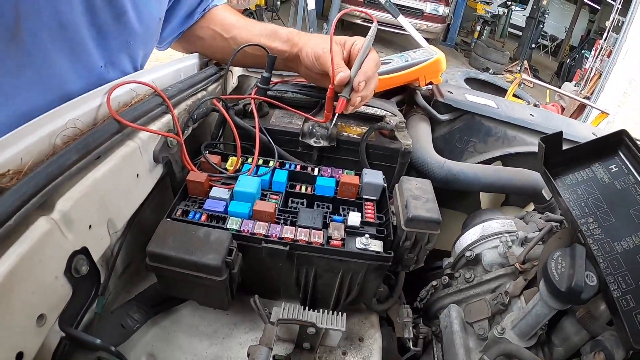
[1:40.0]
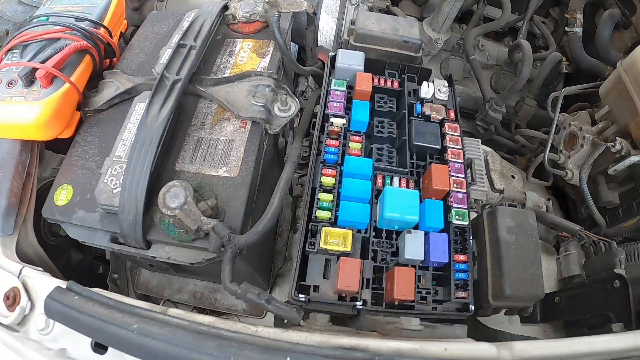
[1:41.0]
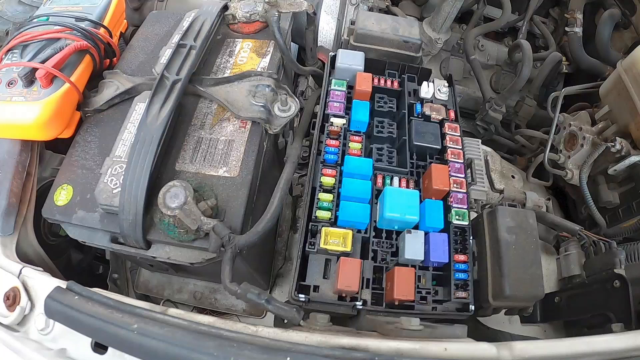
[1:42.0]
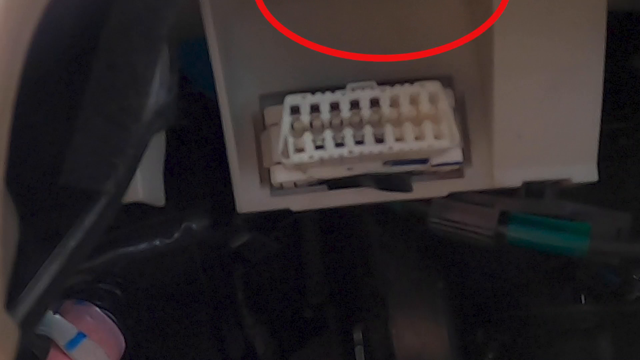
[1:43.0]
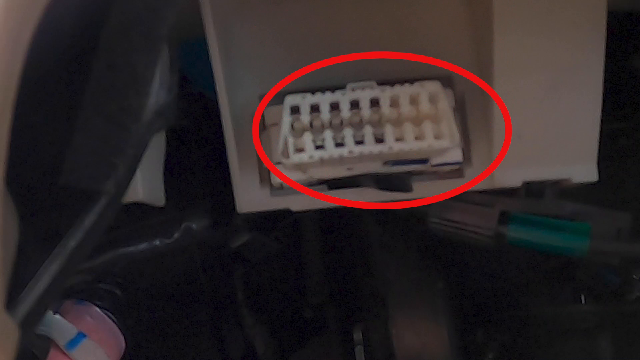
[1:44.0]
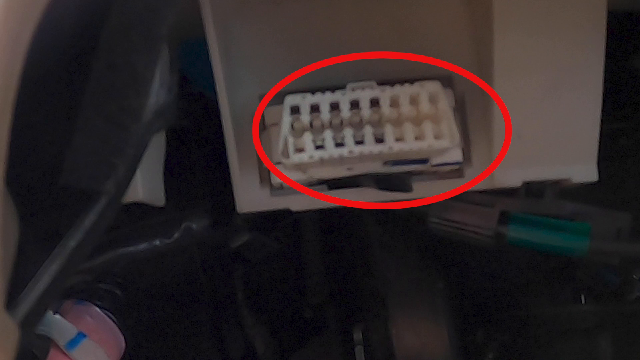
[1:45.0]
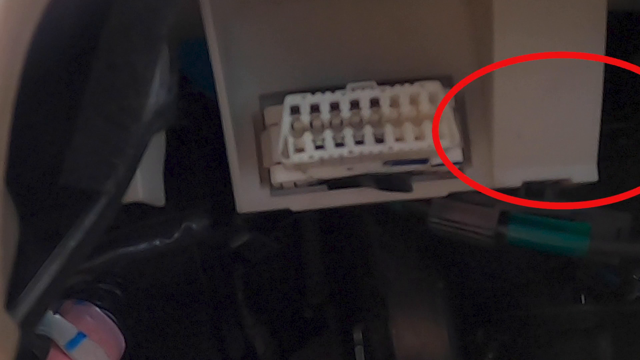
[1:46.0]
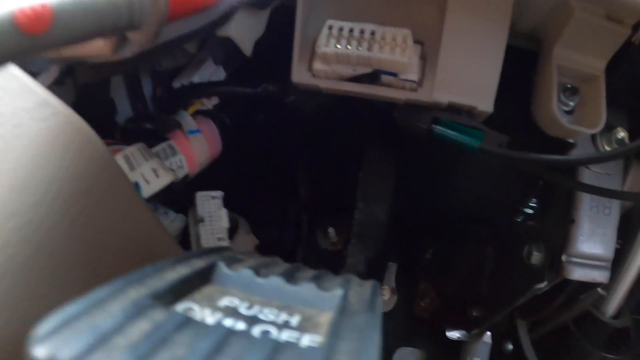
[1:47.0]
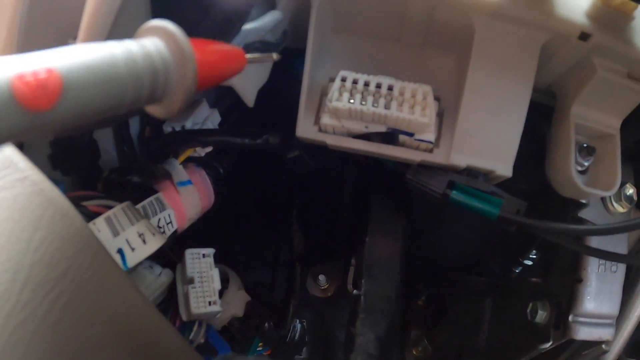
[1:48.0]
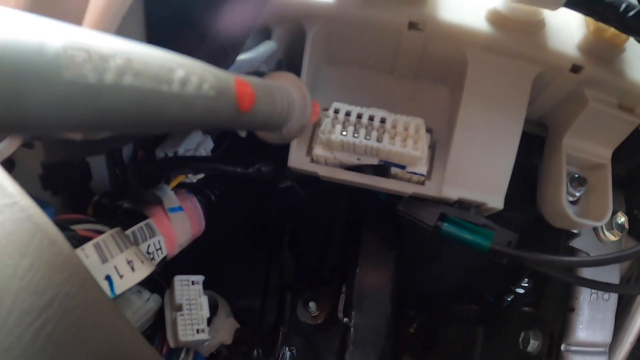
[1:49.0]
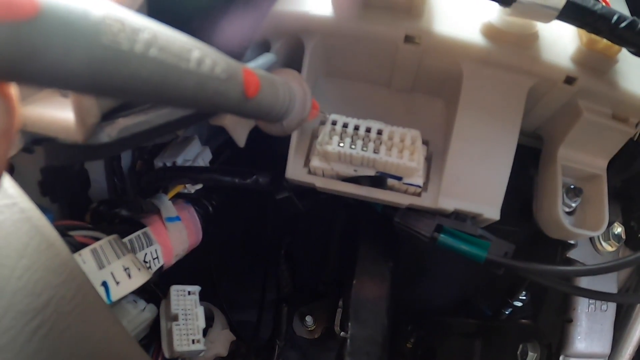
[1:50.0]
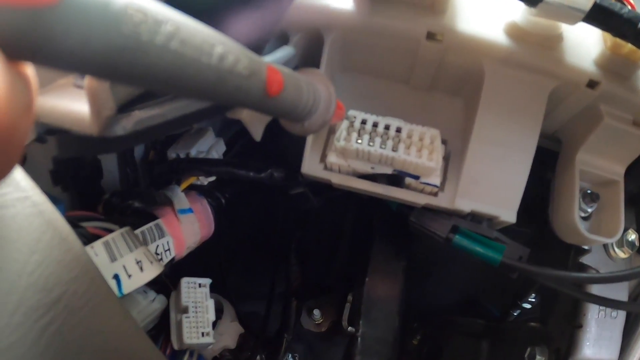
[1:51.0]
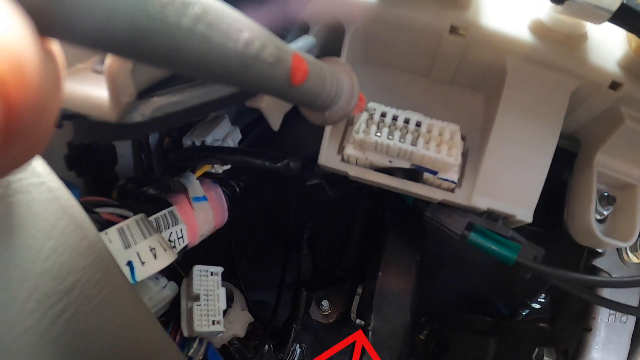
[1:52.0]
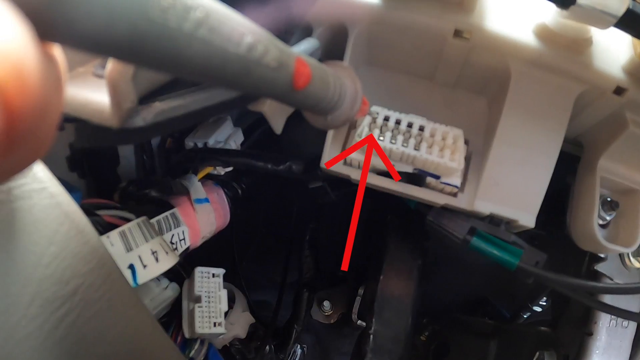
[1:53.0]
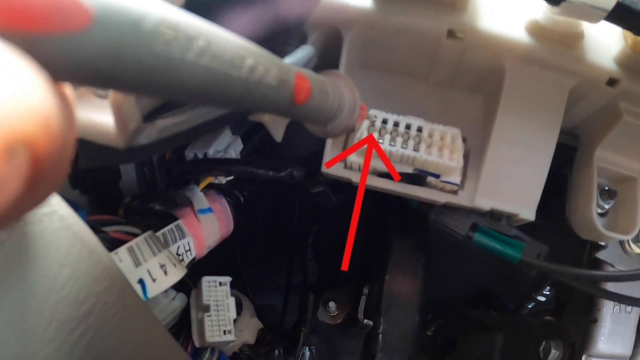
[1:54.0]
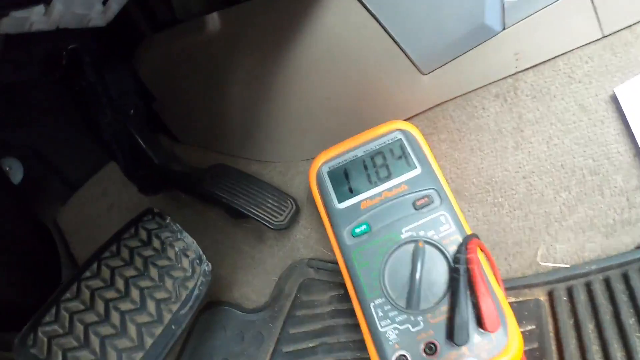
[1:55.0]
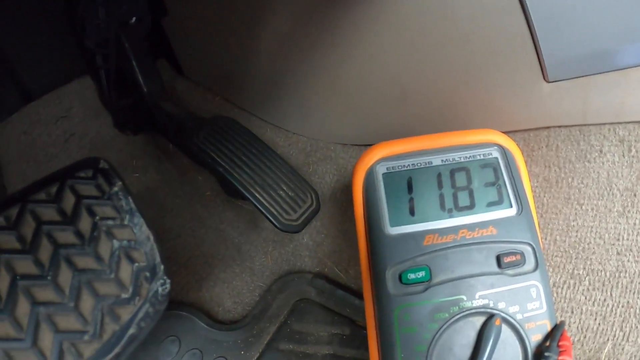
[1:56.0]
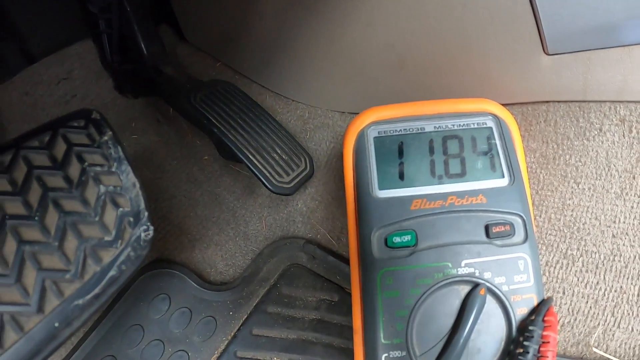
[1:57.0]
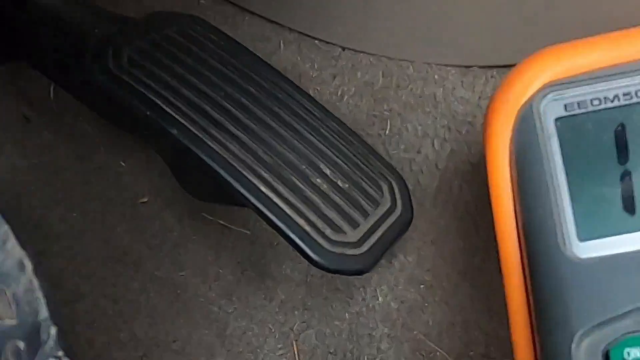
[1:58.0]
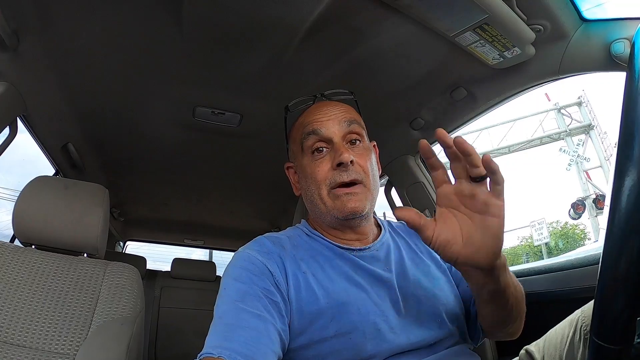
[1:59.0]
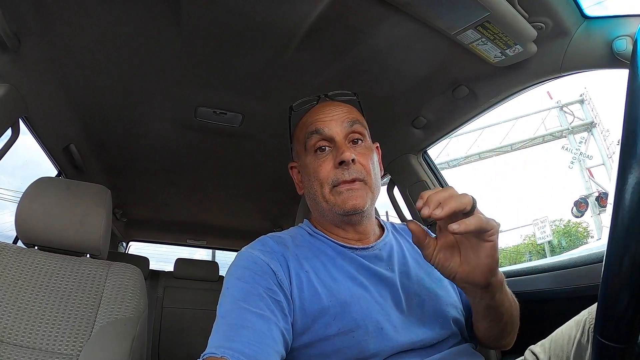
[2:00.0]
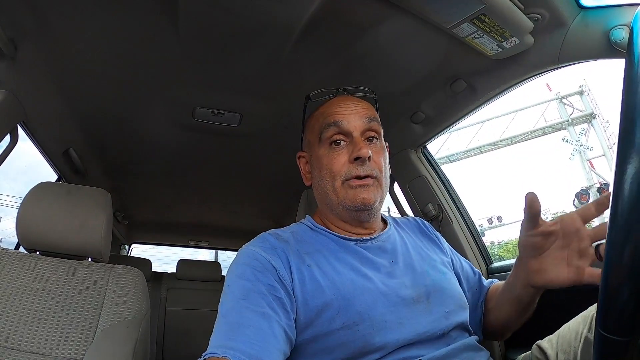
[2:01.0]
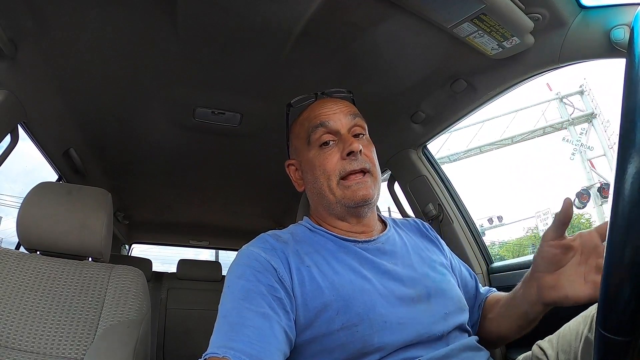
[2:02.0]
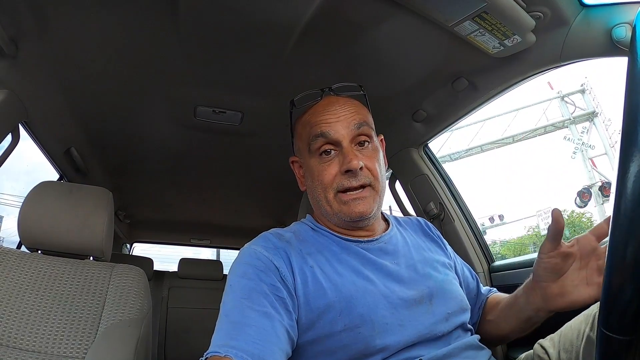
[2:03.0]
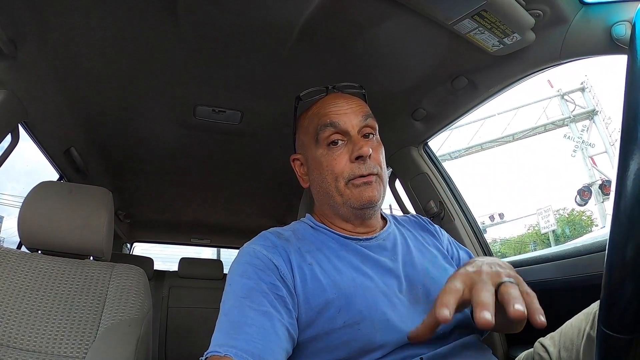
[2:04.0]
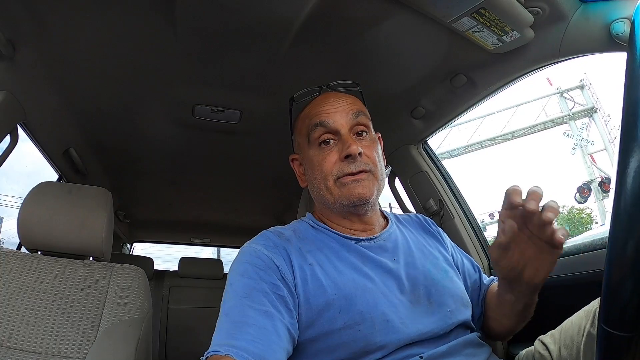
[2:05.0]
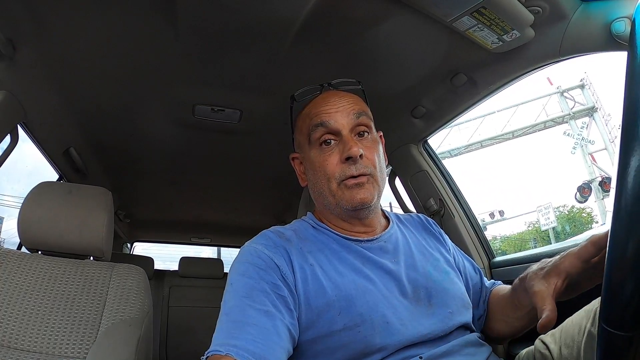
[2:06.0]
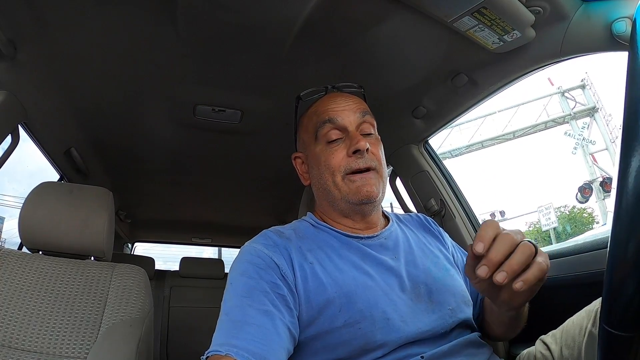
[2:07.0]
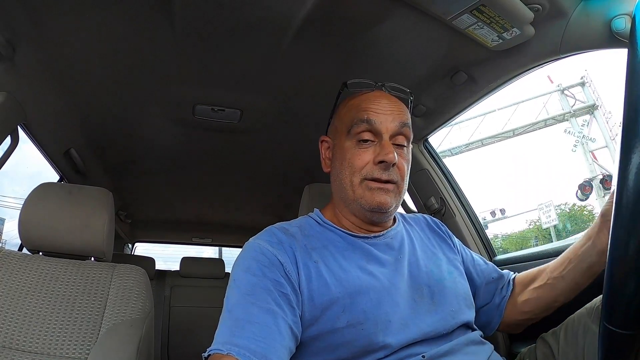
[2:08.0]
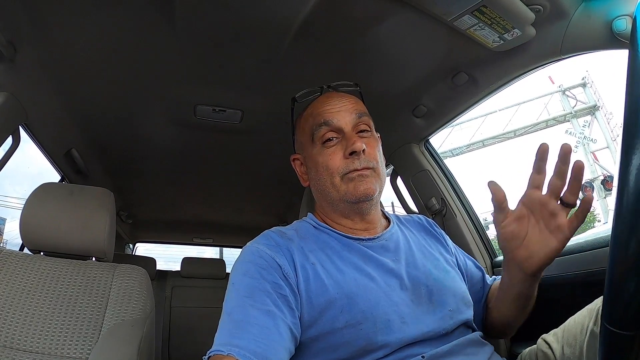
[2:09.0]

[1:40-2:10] The cords are shown along with the device, which apparently measures something. It is rectangular, orange on the outside, possibly a case, and gray inside. Two cords, one black and one red, come from it and are clamped to certain parts of the car. The person wears a light blue shirt with sleeves that look rolled up, and he holds the red cord with his left hand, thumb on one side and the other fingers on the other. In the next scene the cords are wrapped up. An arrow then points to another part of the vehicle; the view appears to be inside, as the gas and brake pedals are visible, and the same measuring device shows a reading that may be 11.83. Then the person who has been holding the camera appears: he is bald, with dark black-framed glasses with clear lenses on his forehead, and he keeps moving his left hand up and down as he talks.